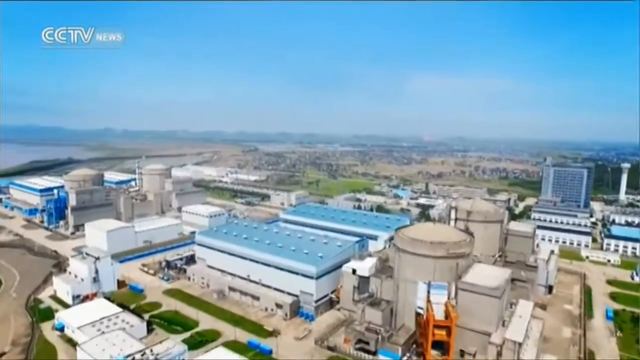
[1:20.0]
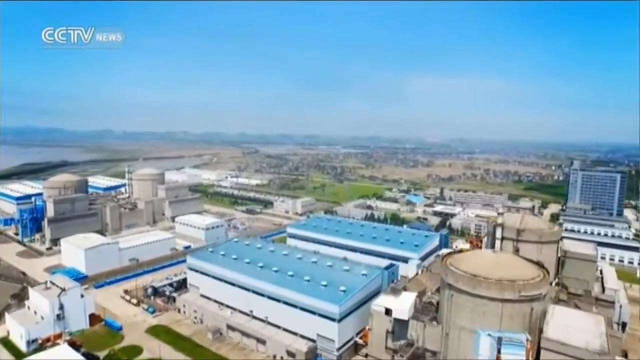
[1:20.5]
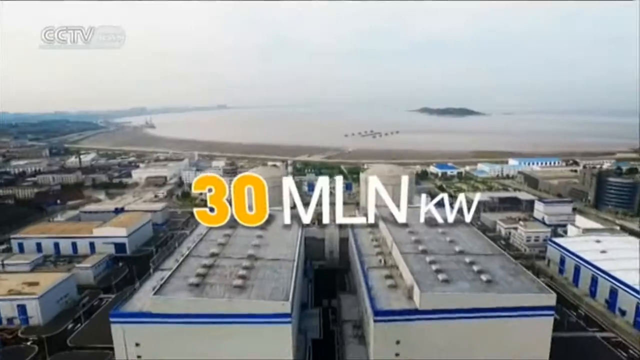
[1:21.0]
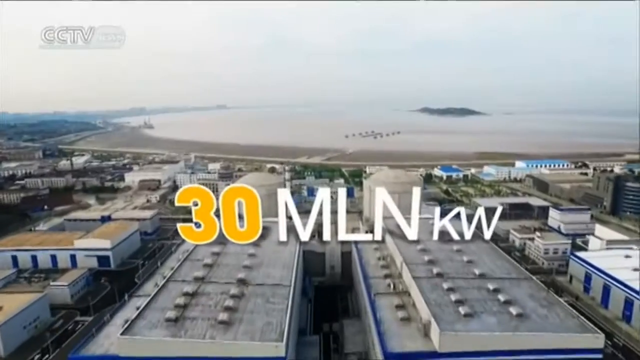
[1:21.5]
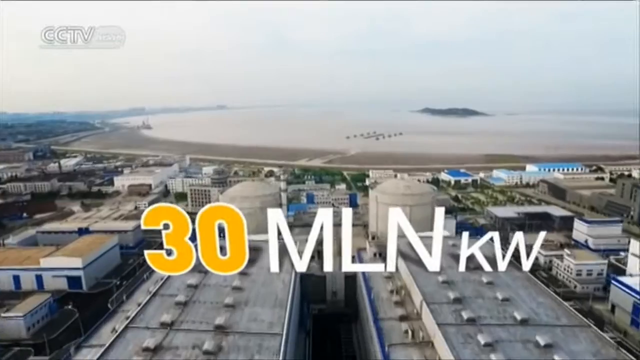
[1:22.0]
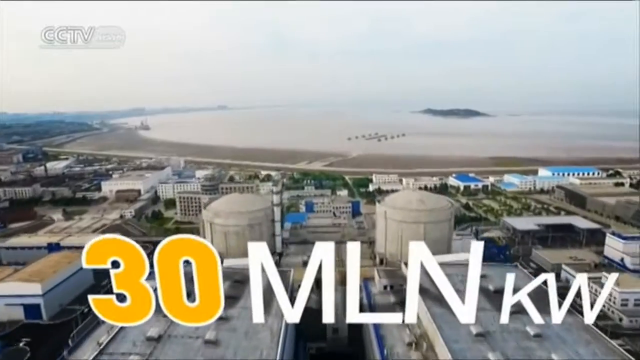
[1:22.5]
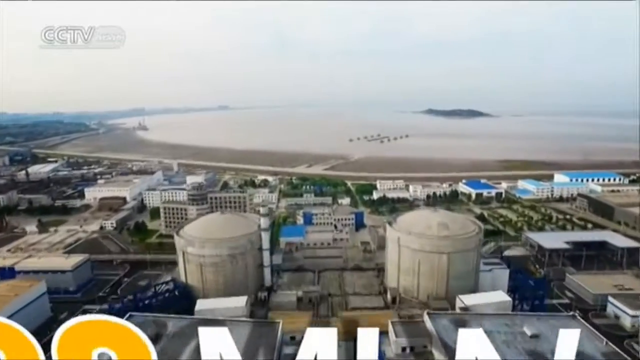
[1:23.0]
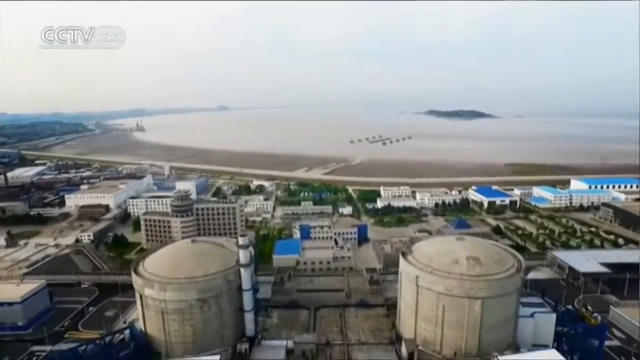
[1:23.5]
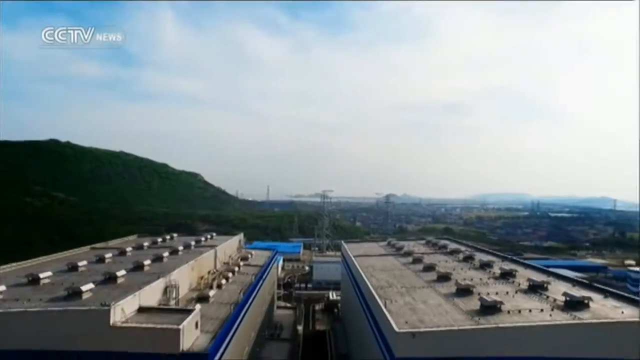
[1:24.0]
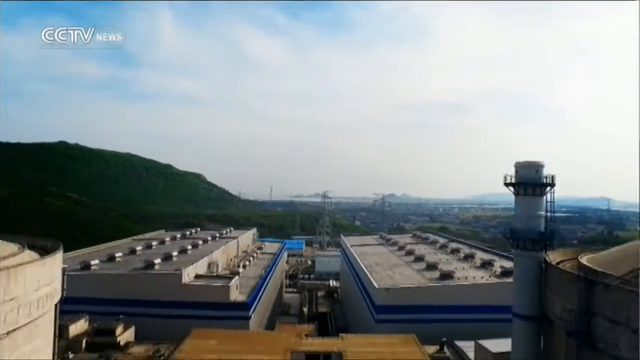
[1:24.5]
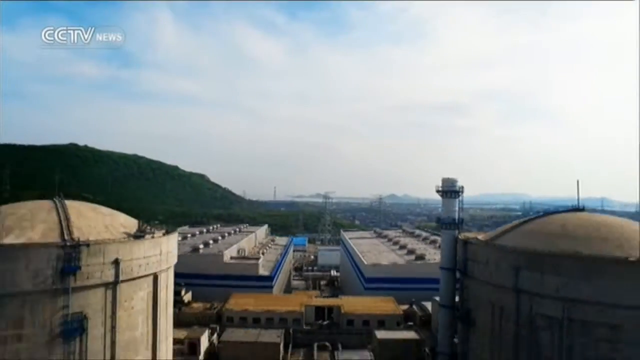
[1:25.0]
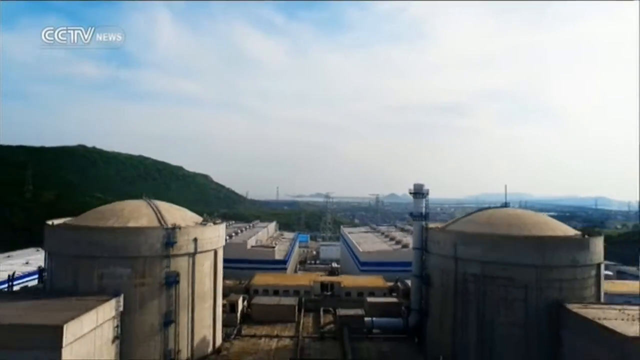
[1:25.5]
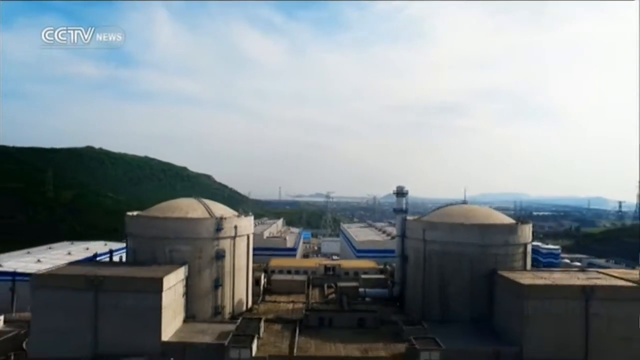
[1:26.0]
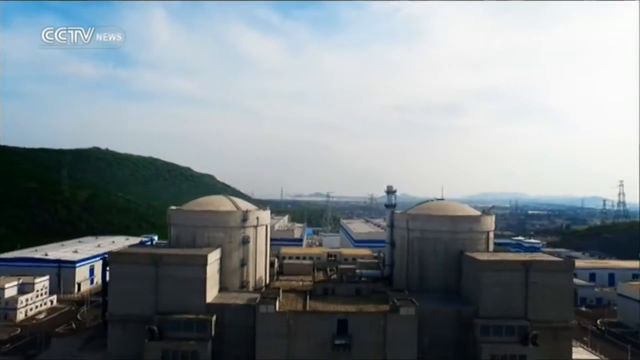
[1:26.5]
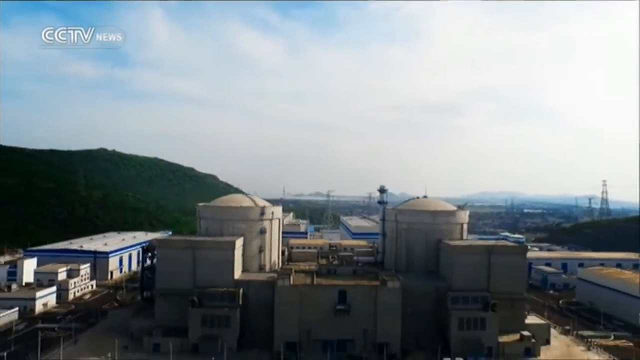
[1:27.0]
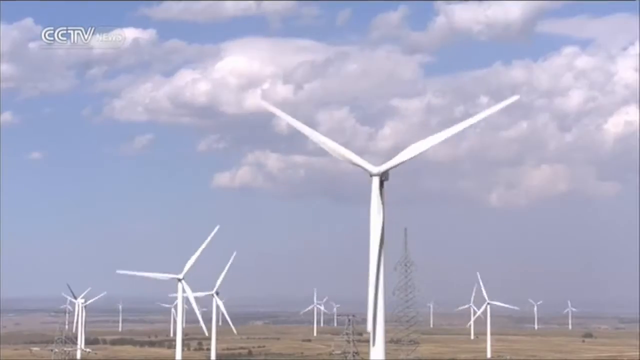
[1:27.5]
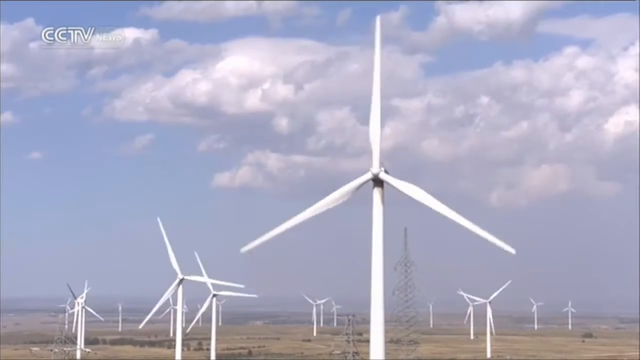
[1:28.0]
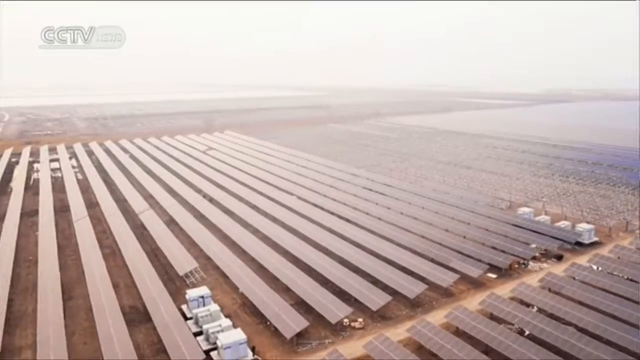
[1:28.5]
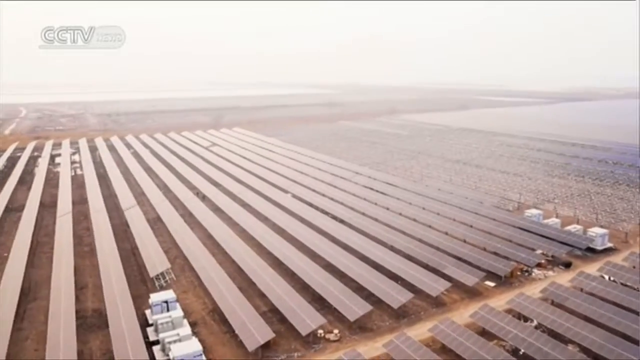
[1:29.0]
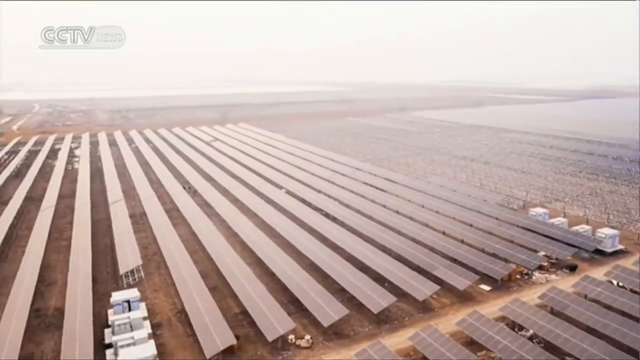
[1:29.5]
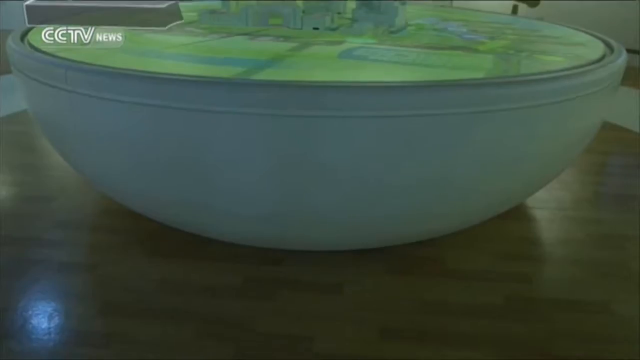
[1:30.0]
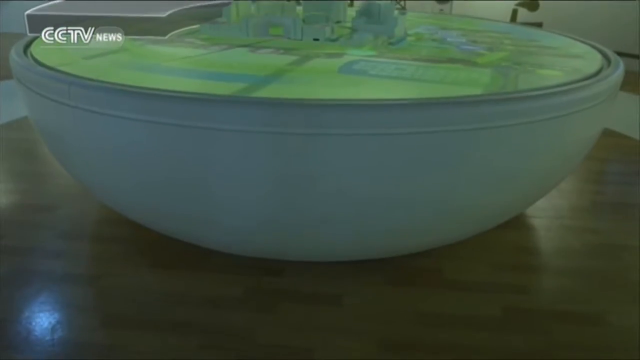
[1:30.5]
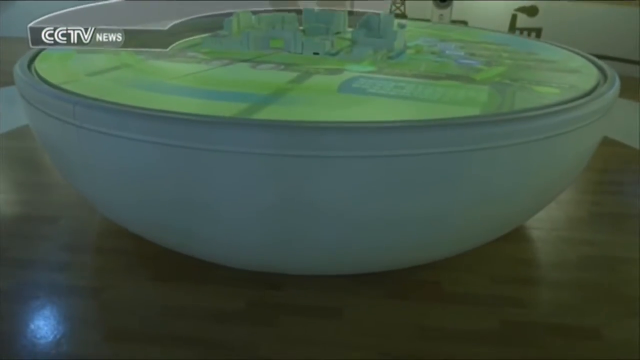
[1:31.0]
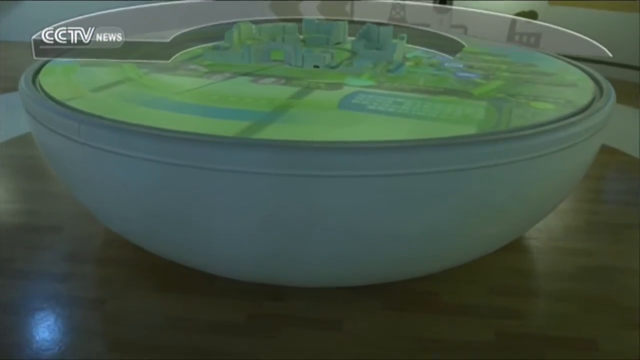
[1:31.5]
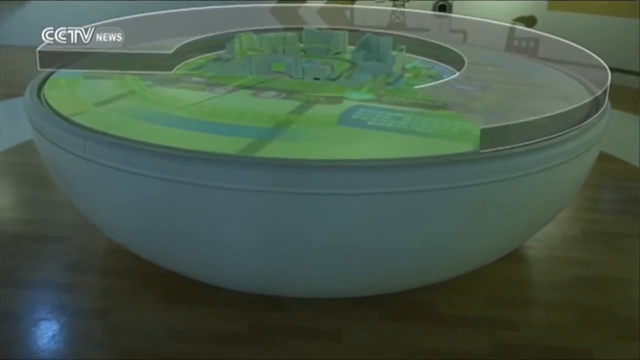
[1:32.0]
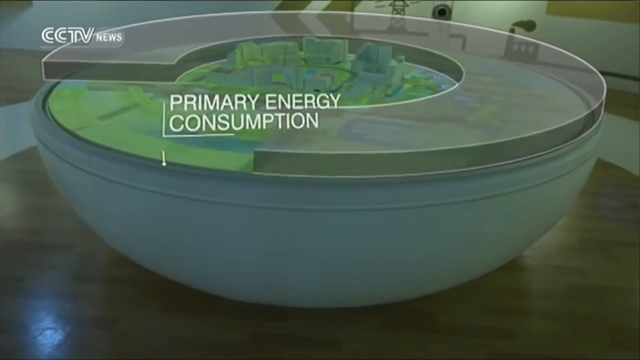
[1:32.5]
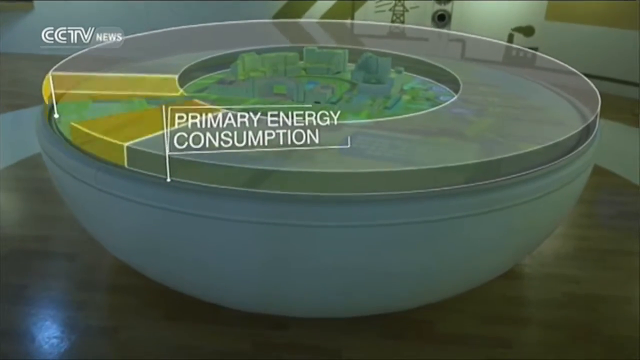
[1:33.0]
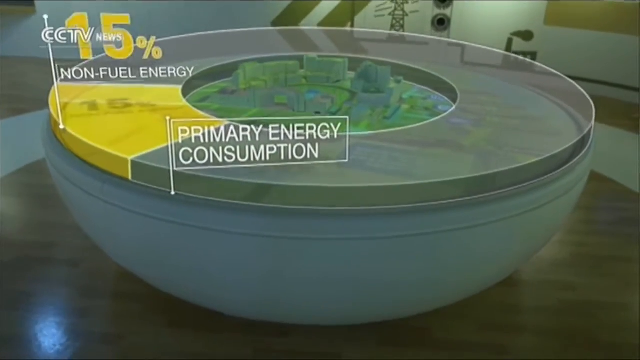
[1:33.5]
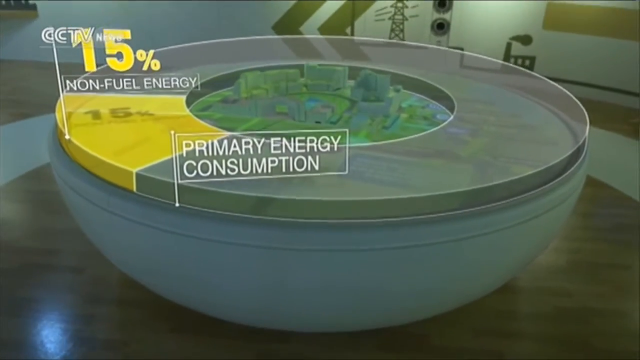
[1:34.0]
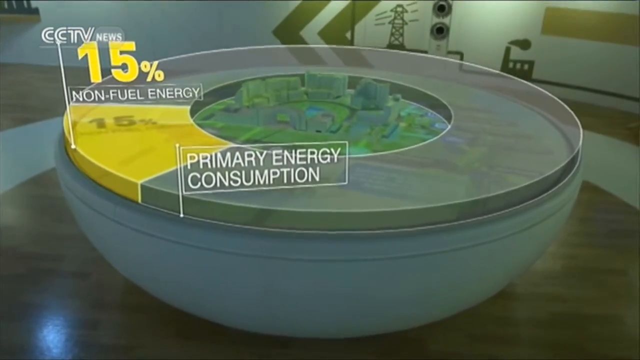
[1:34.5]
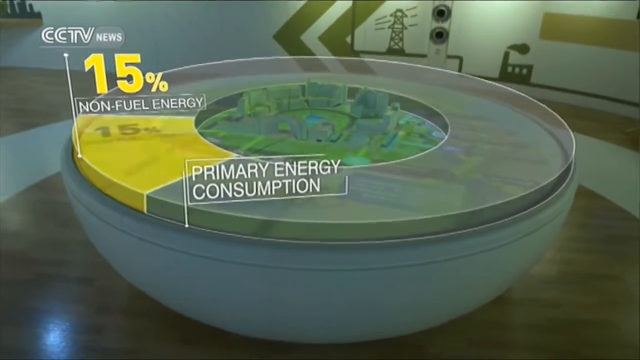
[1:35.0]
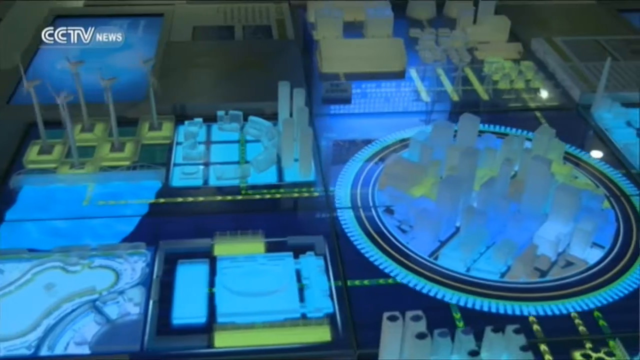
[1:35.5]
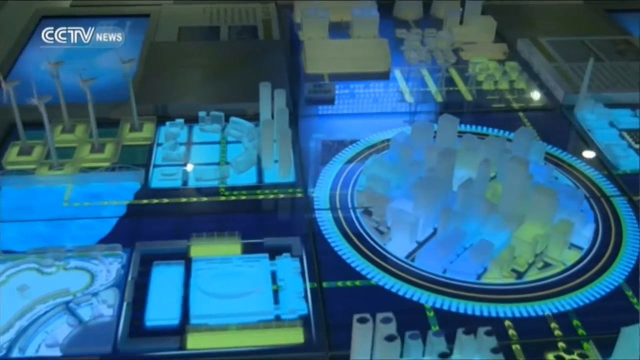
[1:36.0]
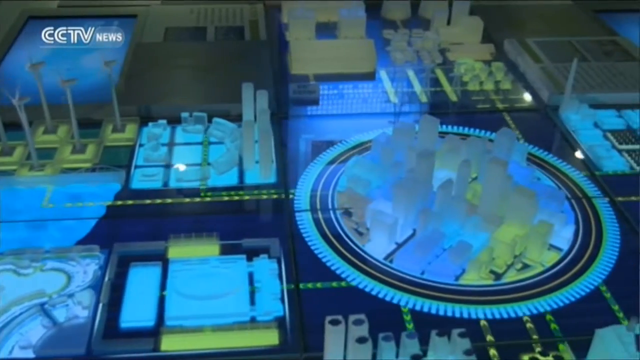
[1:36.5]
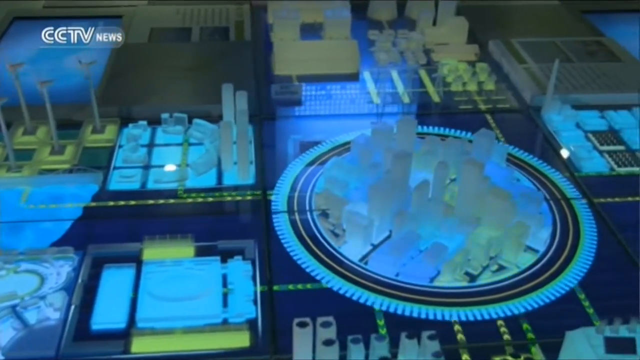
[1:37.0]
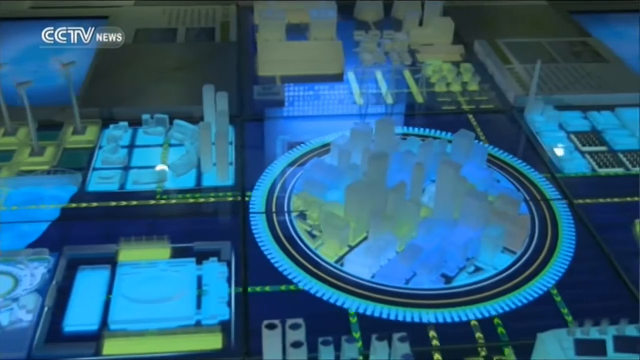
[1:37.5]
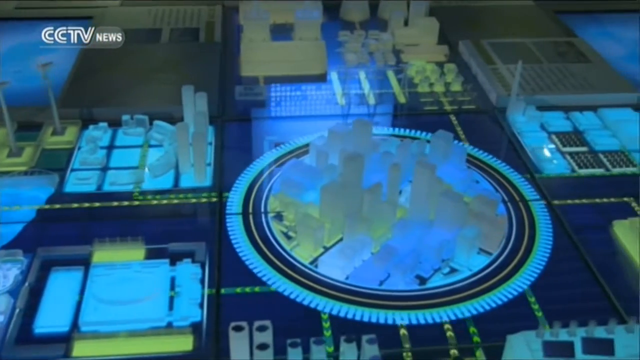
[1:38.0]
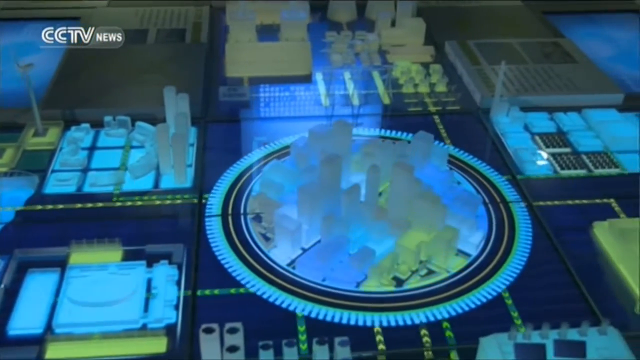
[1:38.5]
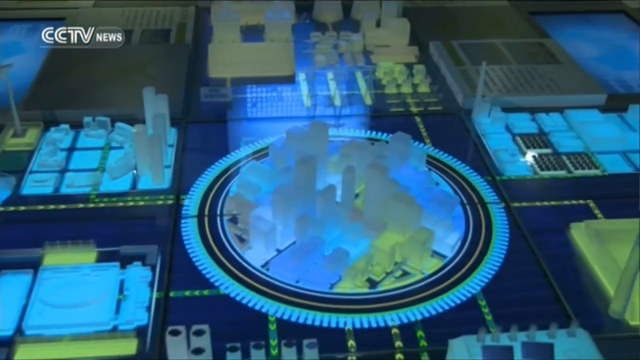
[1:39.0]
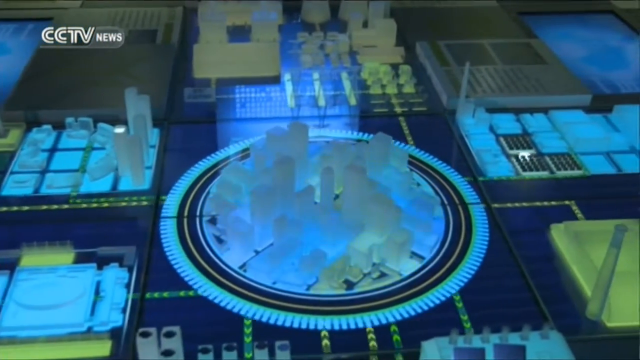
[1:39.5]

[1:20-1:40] Under "CCTV News," big white buildings with blue tops appear, one in the background looking like a maze, with mountains behind as the camera pans across. Text reads "30 million kilowatts" as the view pans across the tops of the buildings. Very big white windmills and big panels follow, then a circle: text reads "primary energy consumption" and "15% non-fuel energy" on something like a half circle, blue at the bottom, then green, with the small 15% section in yellow. A diagram view shows how everything moves and works. The buildings are white, it is daytime, and the sky, water and mountains are visible.